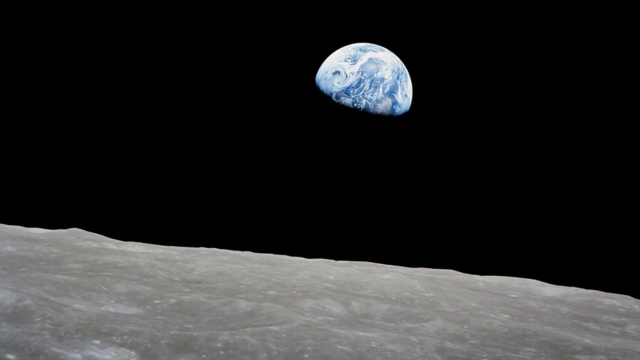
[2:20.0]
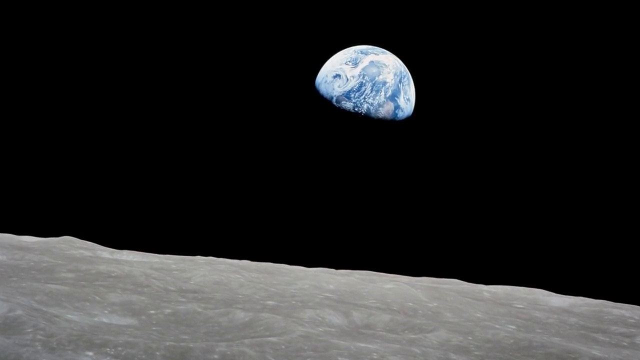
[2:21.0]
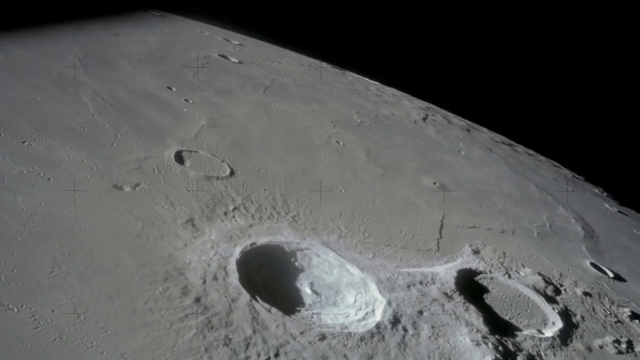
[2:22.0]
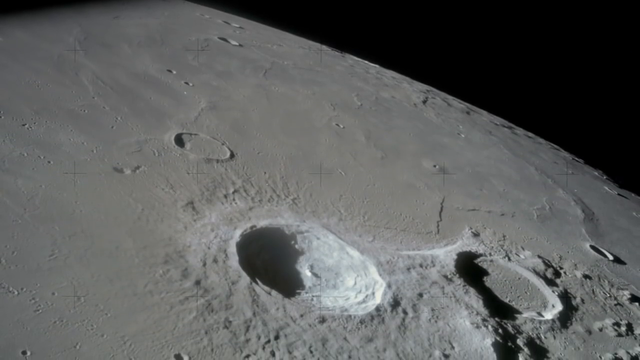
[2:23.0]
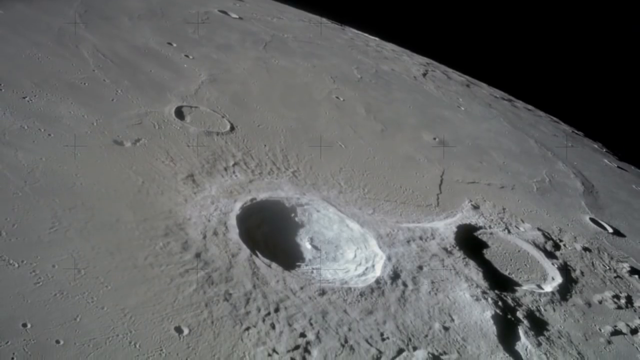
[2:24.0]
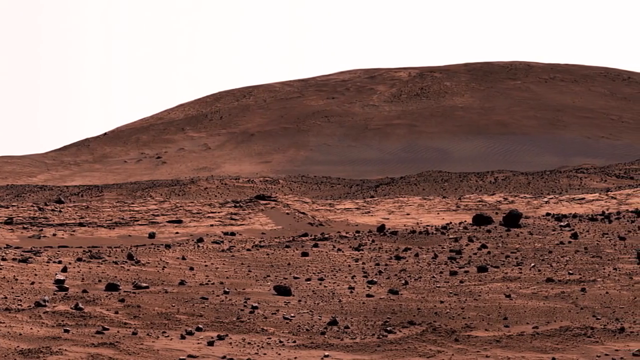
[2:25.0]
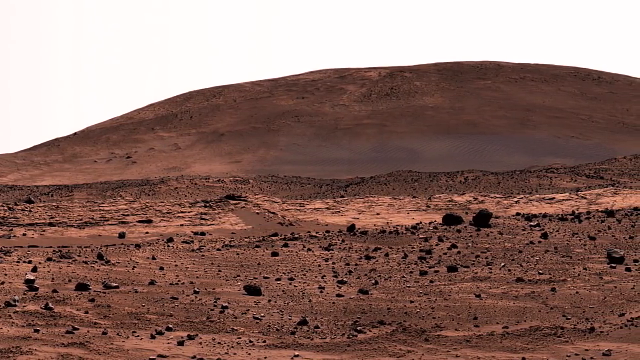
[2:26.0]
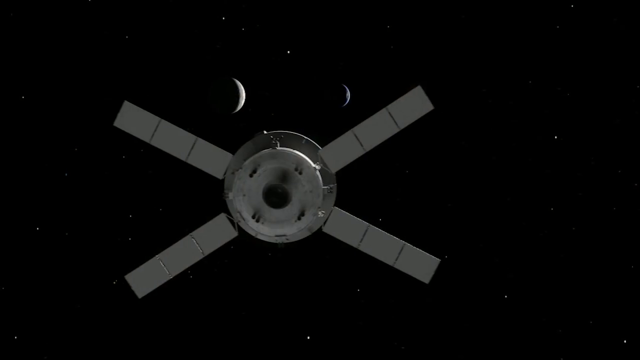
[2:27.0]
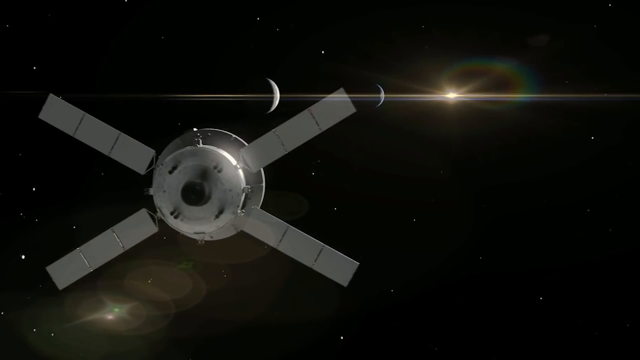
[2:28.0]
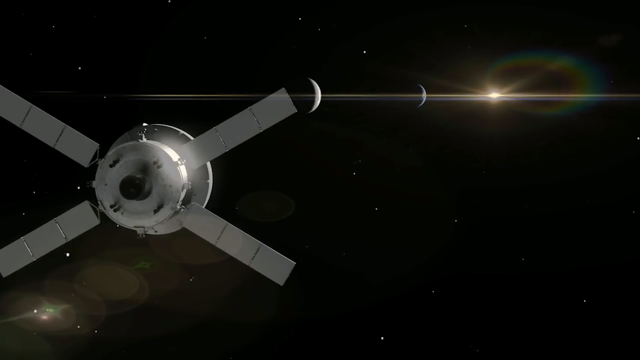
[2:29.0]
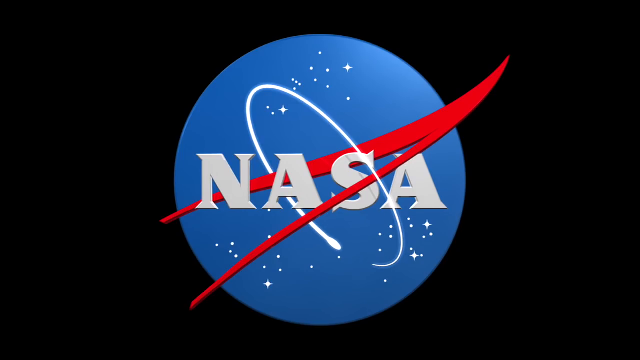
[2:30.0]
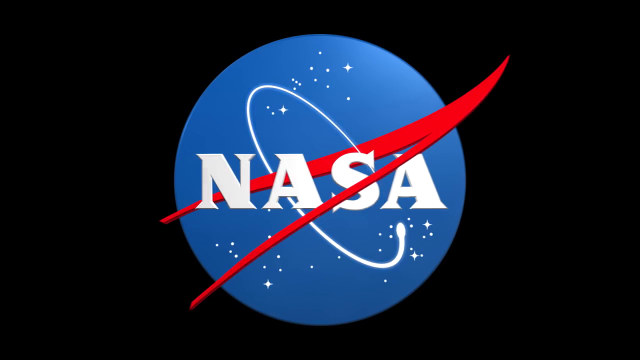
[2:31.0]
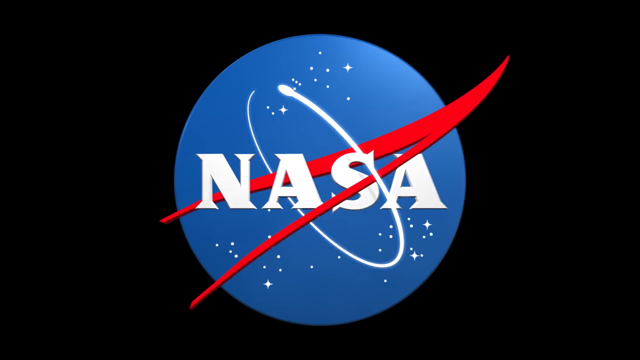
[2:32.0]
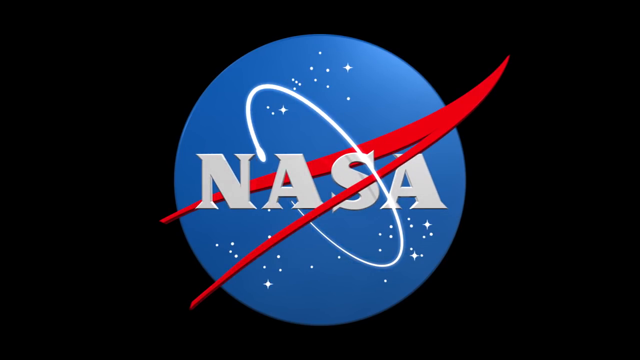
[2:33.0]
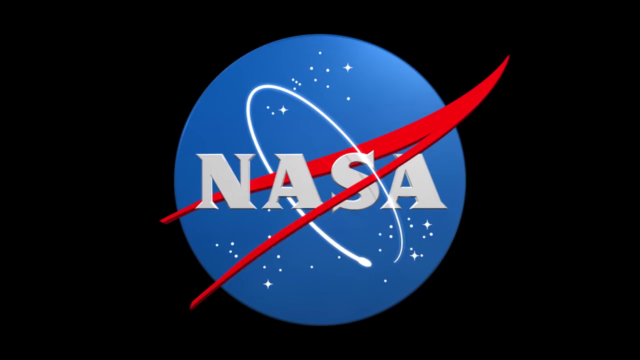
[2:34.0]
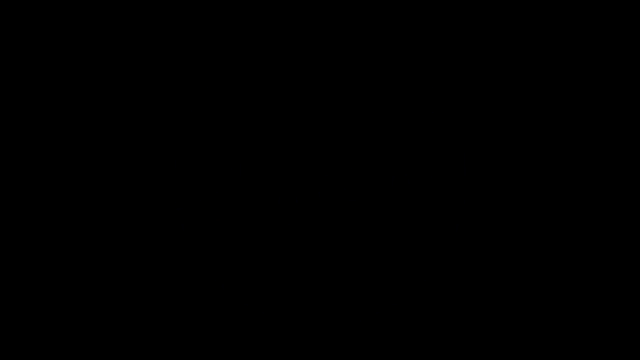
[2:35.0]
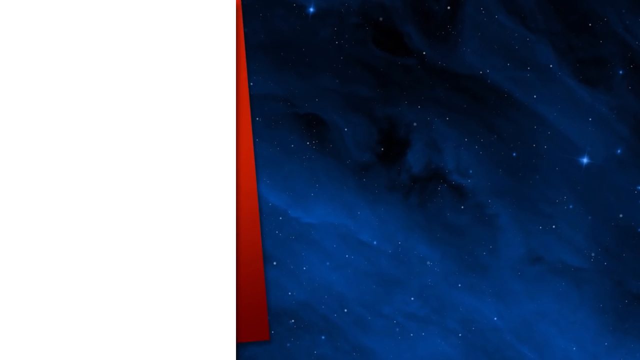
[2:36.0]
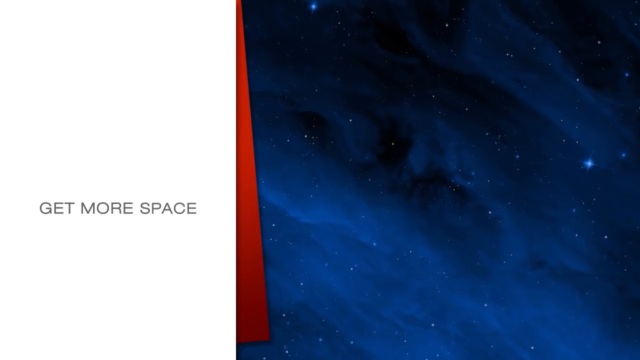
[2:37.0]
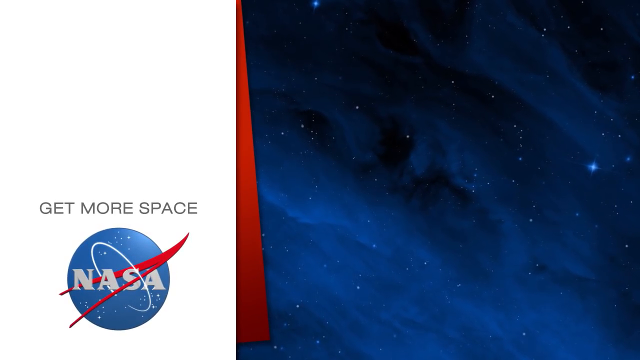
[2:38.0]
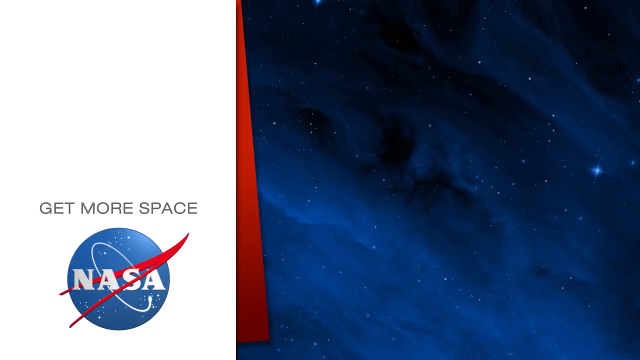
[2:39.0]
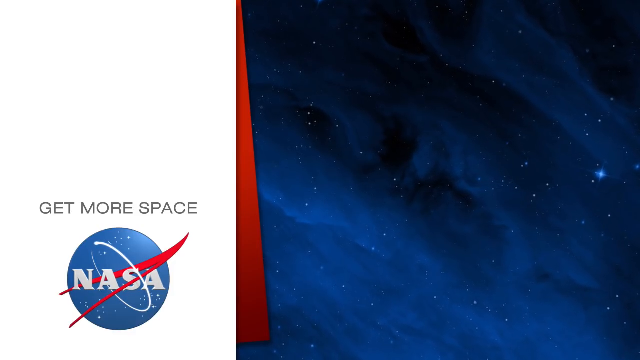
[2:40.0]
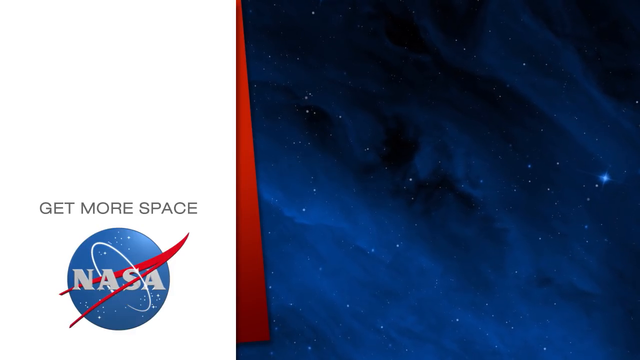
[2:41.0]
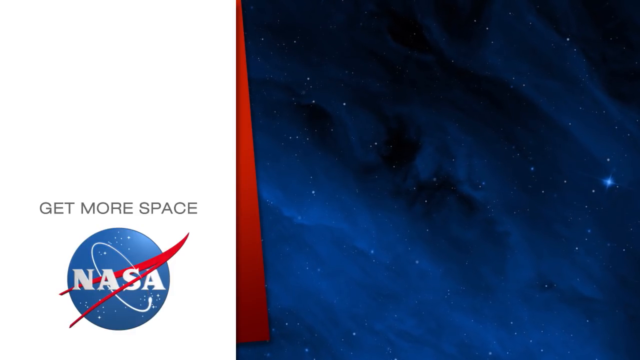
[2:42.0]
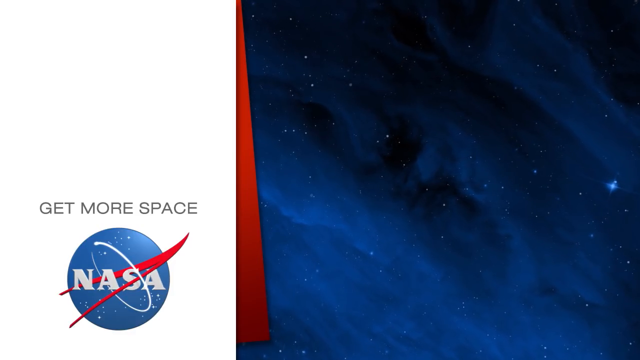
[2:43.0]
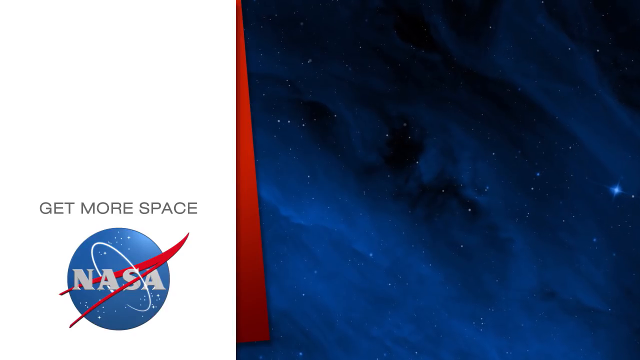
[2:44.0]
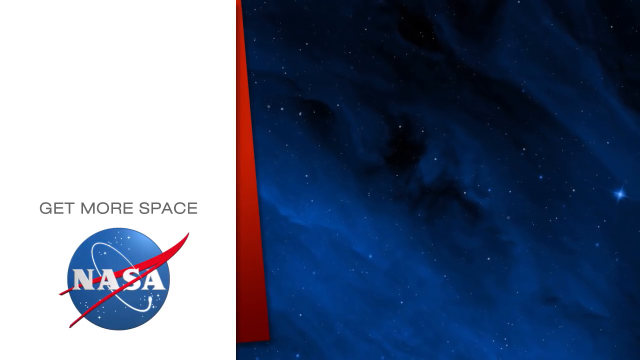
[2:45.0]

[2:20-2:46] Most of the Earth is visible at the bottom of the frame, with more of it on the left side than the right, and the bottom of the Earth looks cut off. The bumpy gray surface appears again, followed by a bumpy brown surface with hills. A satellite looks like it forms an X with a circle in the middle. Then a blue circle with the NASA logo appears, with "NASA" apparently in white, white rings around it, what looks like a red greater-than symbol, and white stars around the logo. The ring moves around "NASA", and the text "get more space" appears with the NASA symbol.